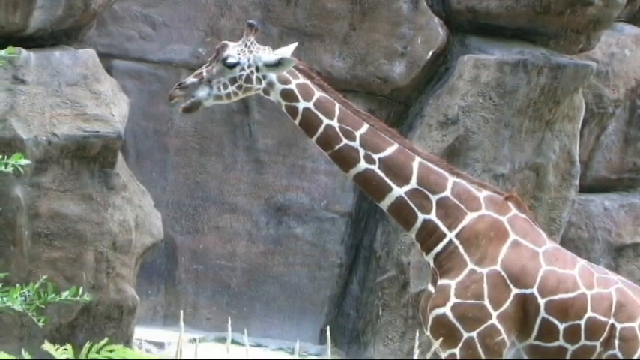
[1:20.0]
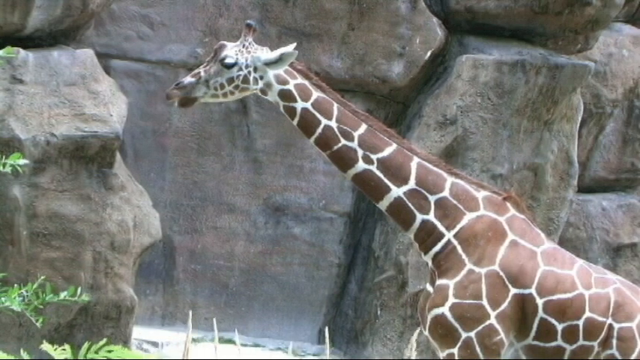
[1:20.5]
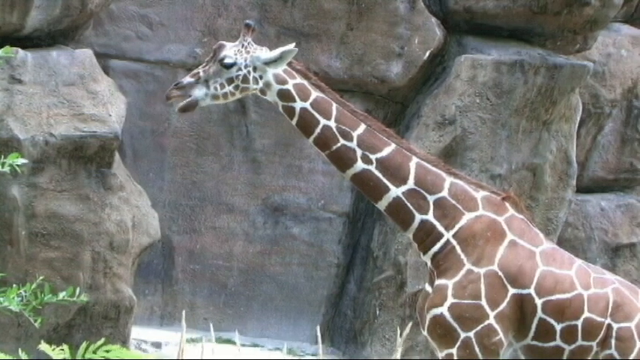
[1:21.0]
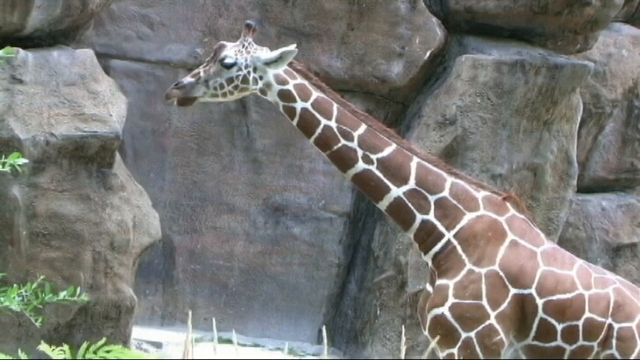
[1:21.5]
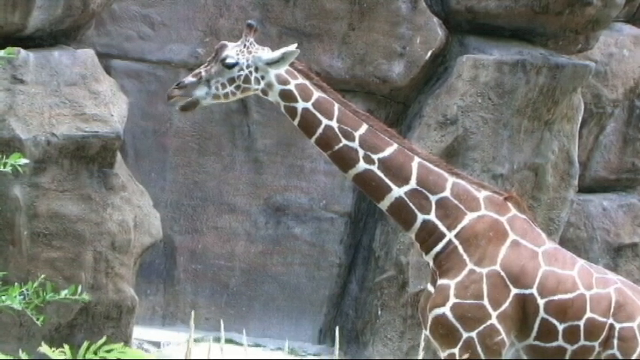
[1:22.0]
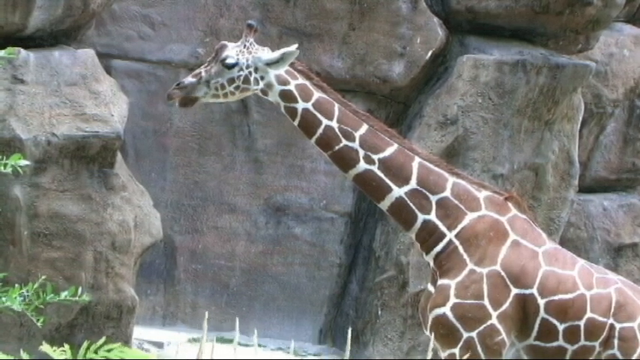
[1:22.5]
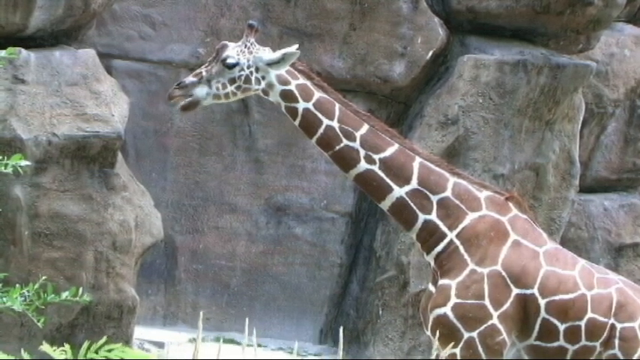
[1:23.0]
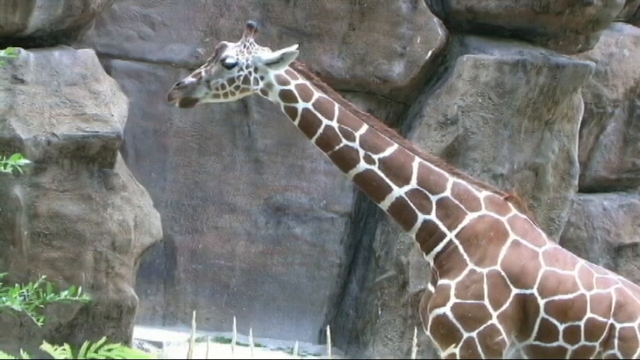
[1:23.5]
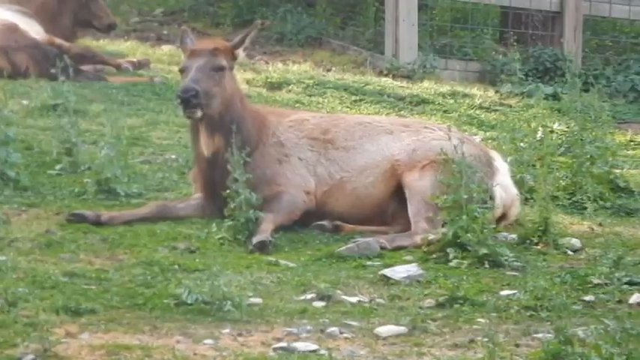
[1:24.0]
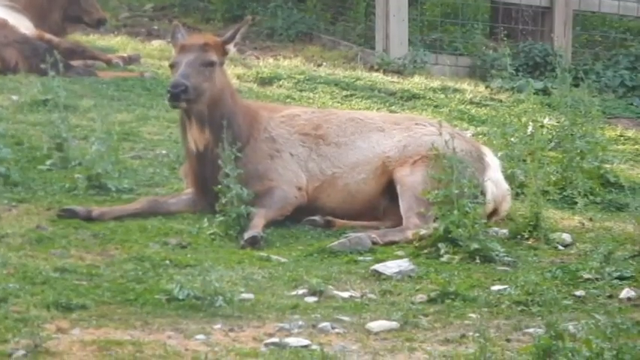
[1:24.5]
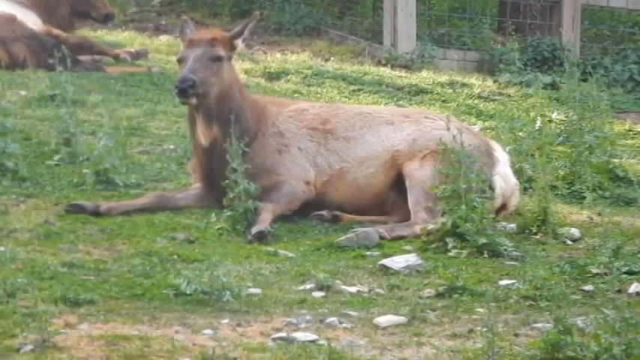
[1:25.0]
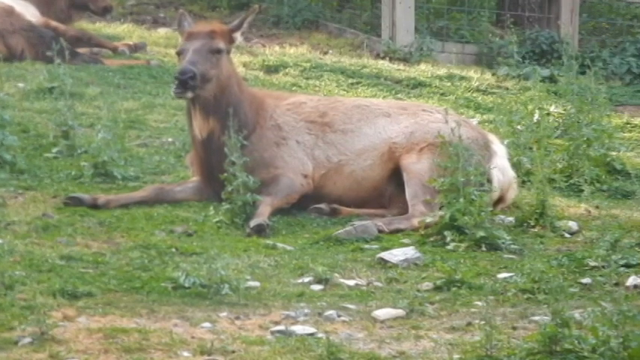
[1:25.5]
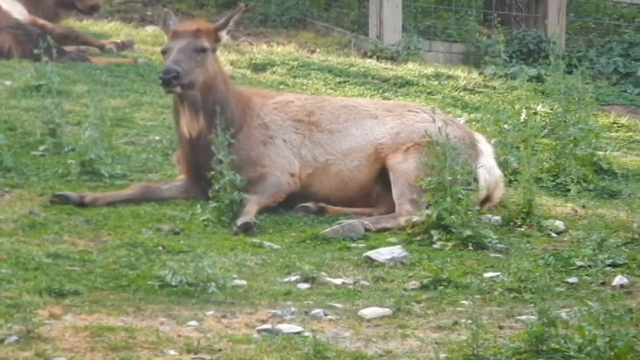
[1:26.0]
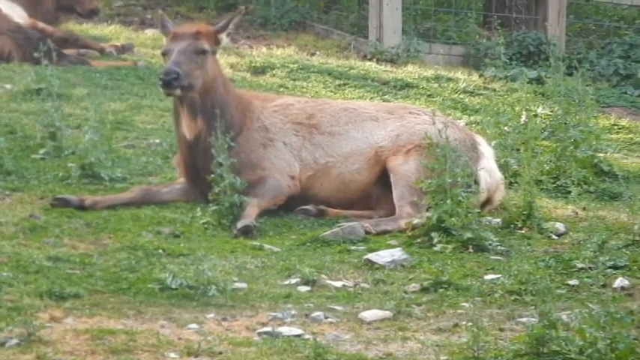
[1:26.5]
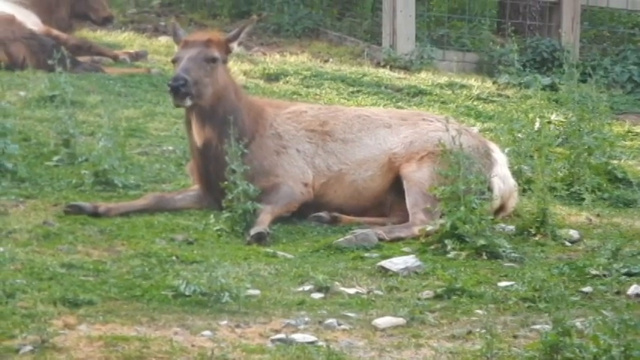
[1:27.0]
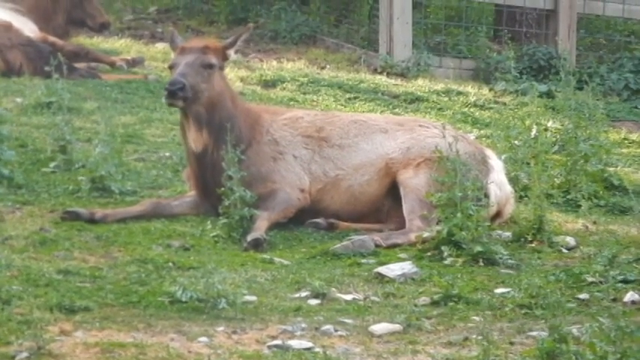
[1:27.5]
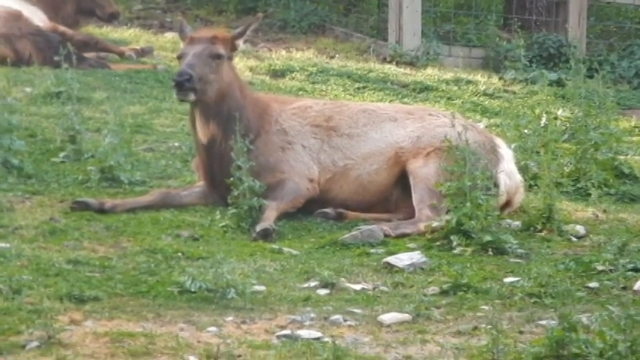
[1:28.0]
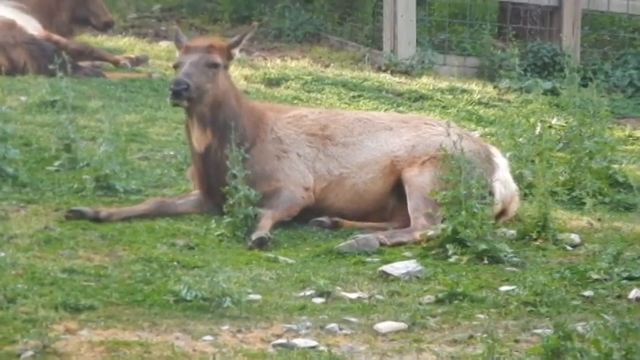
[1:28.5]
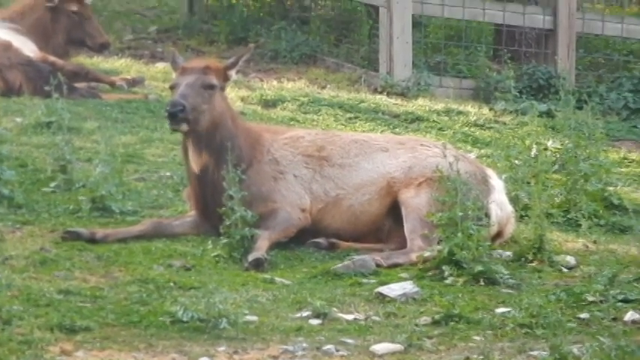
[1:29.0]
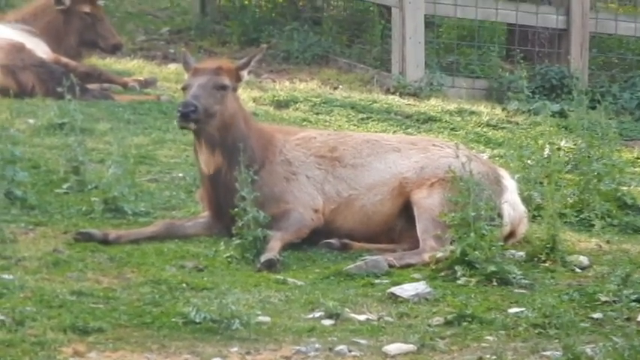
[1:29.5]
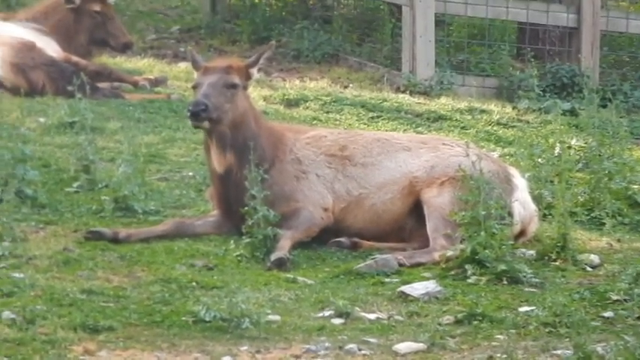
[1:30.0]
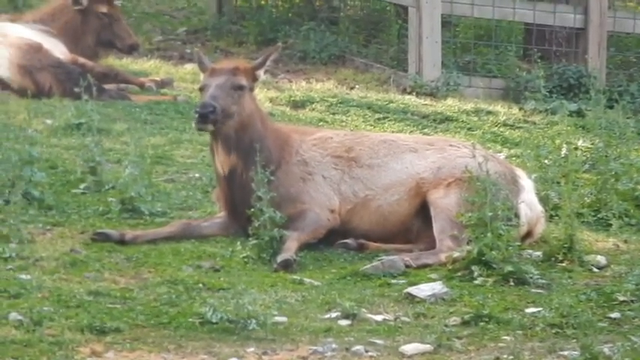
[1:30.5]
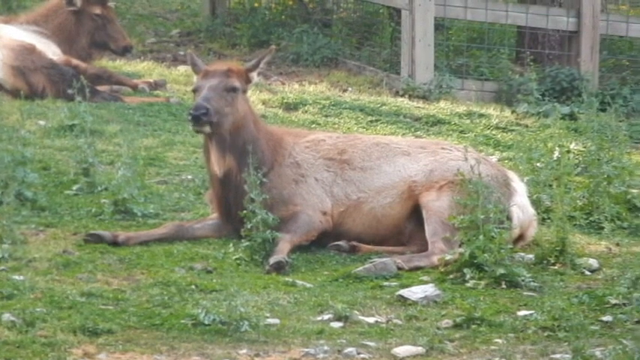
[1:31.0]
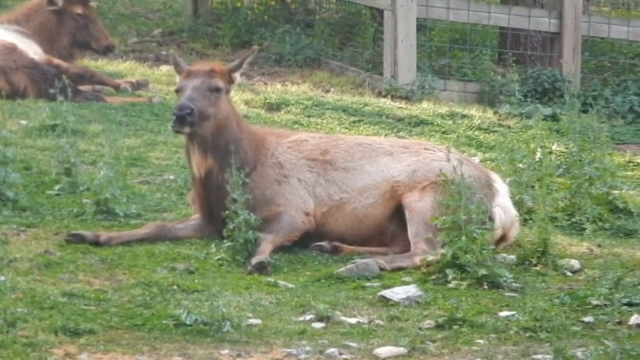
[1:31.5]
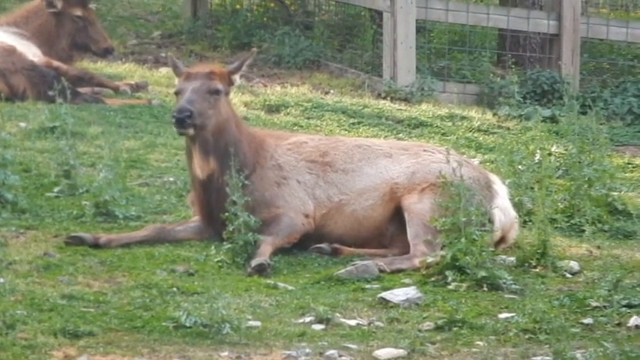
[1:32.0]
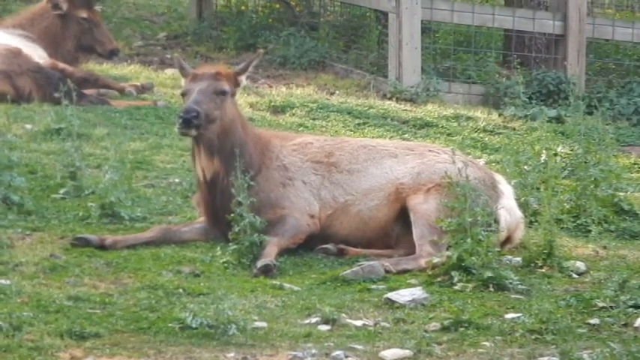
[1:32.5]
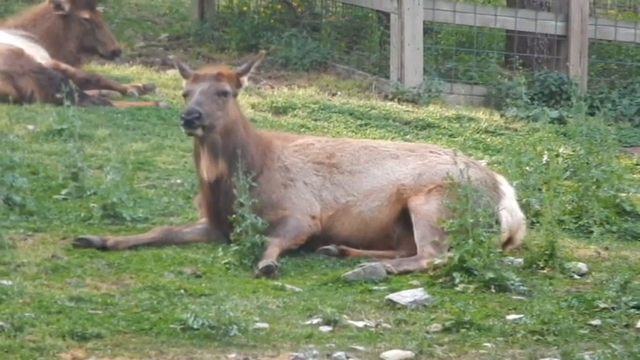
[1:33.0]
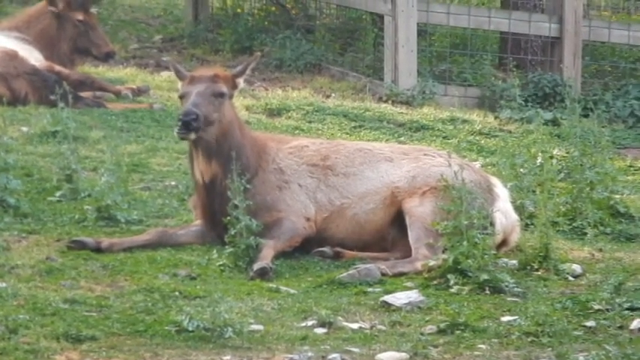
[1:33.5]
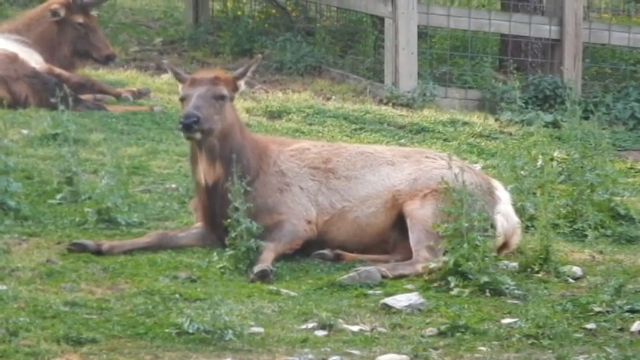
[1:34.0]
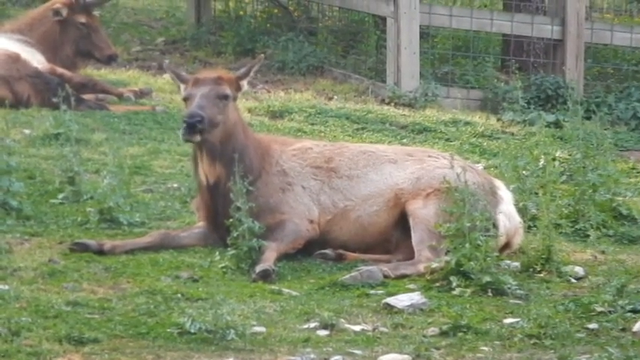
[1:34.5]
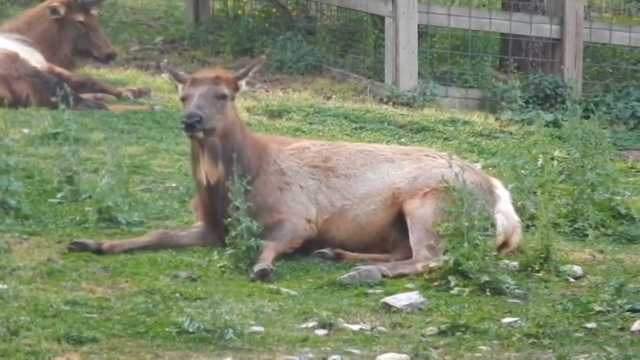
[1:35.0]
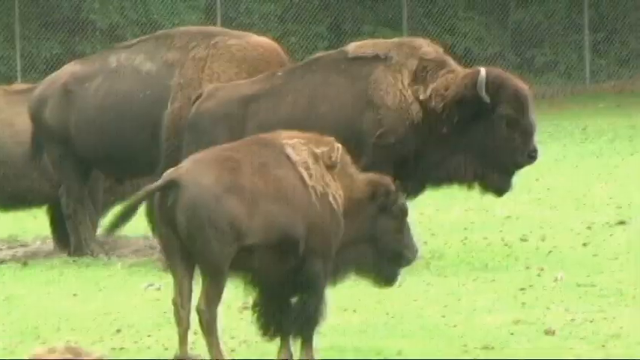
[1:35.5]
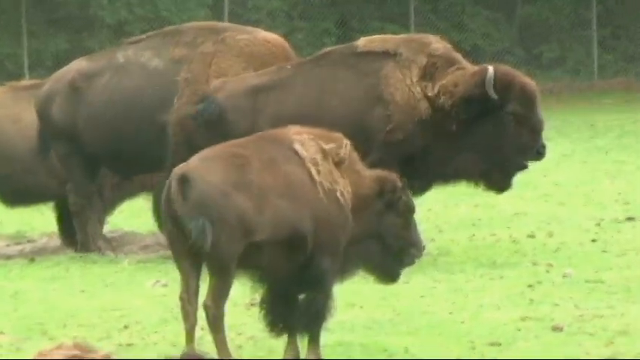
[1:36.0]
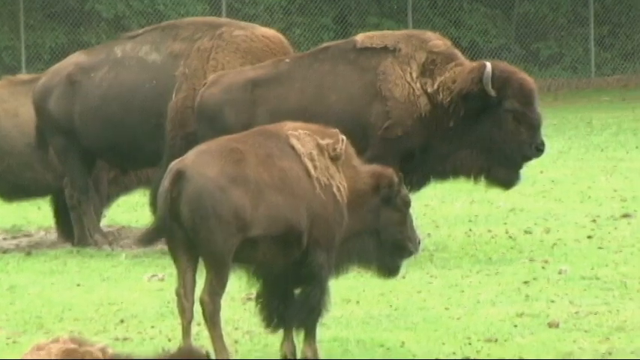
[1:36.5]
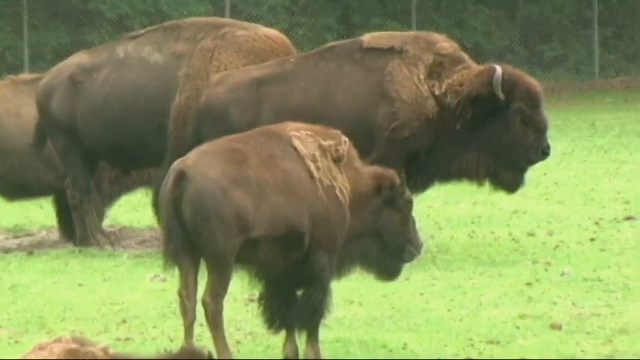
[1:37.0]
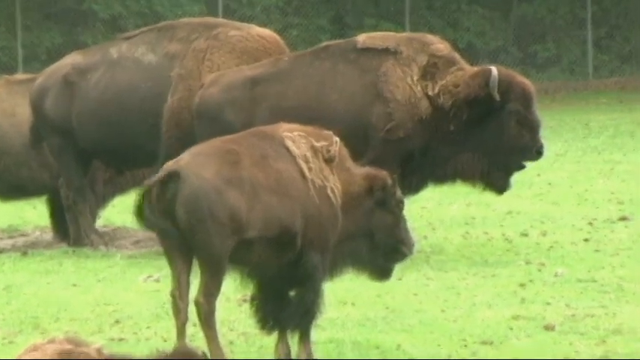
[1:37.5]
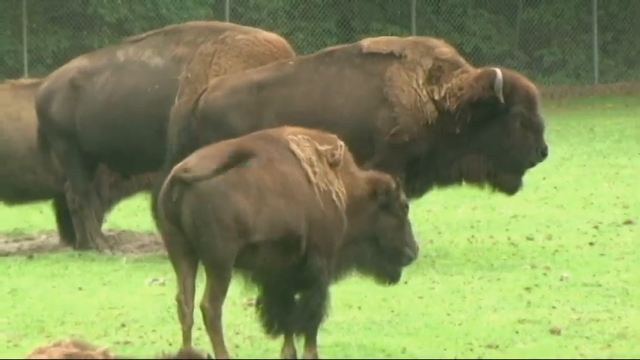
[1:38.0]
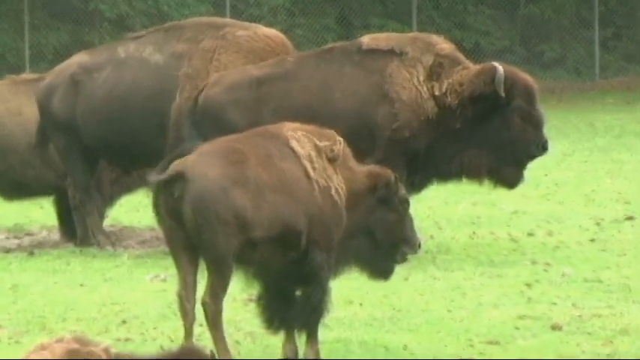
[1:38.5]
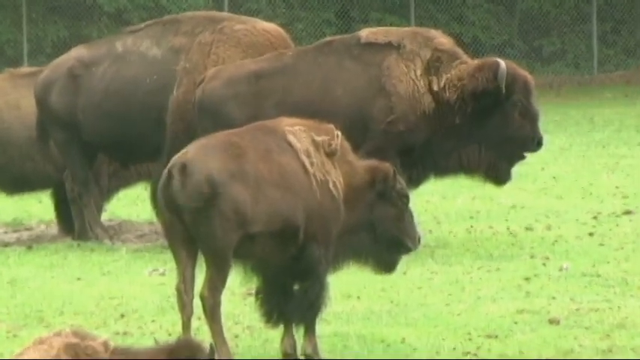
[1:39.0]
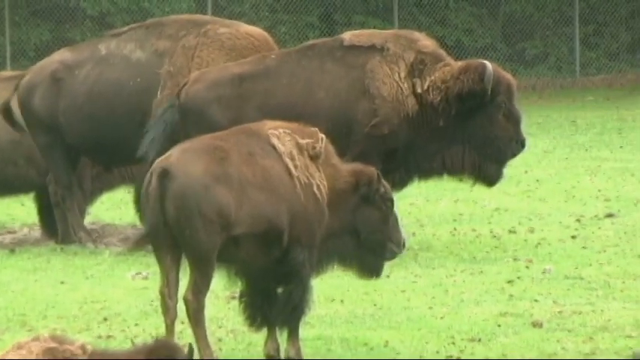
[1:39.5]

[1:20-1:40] The giraffe continues to chew on something. The video then cuts to an unidentified brown animal lying on the ground chewing something, with some plants right in front of its body. It turns towards the camera, chewing and chewing, and stares at the screen. Another one of these animals is in the upper left corner of the screen, and there is fencing to the upper right side. The video then cuts to some bison or buffalo: a small one in the foreground and larger ones in the background, all facing towards the right side of the screen. The little one's tail wags a lot, and the tails of the ones in the background begin to wag as well. The bison keep wagging their tails and staring off to the right side. They seem to be in some kind of field area, with a fence in the background.